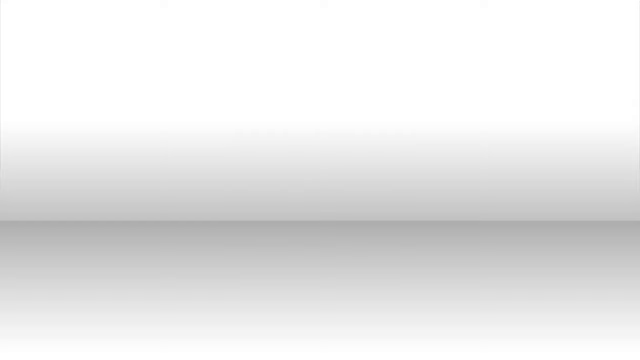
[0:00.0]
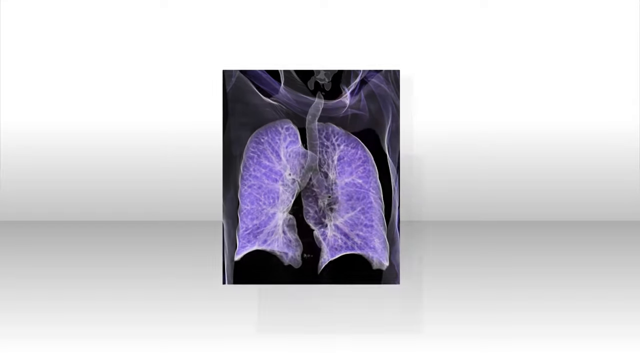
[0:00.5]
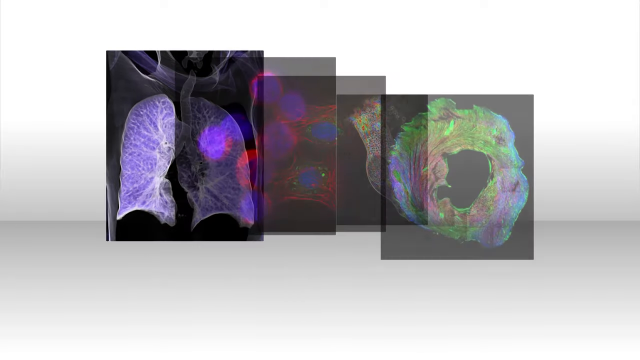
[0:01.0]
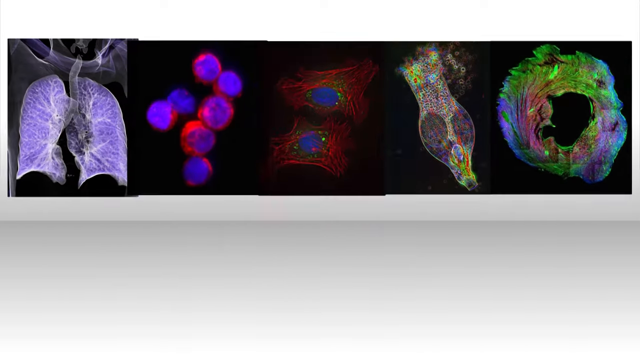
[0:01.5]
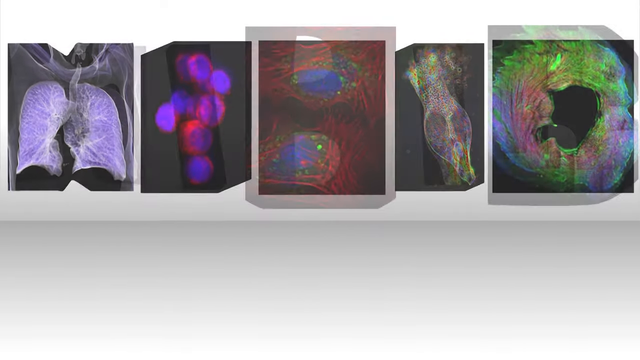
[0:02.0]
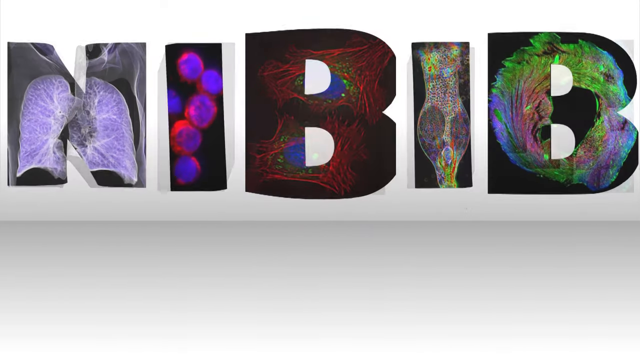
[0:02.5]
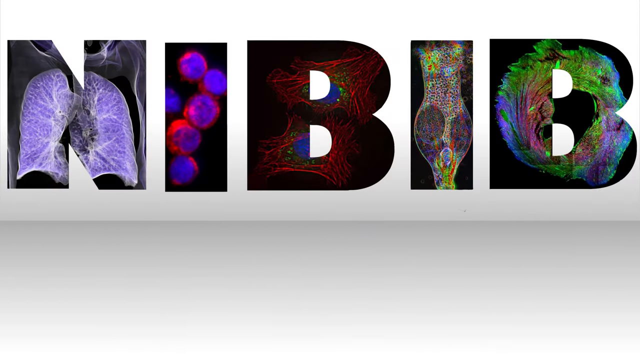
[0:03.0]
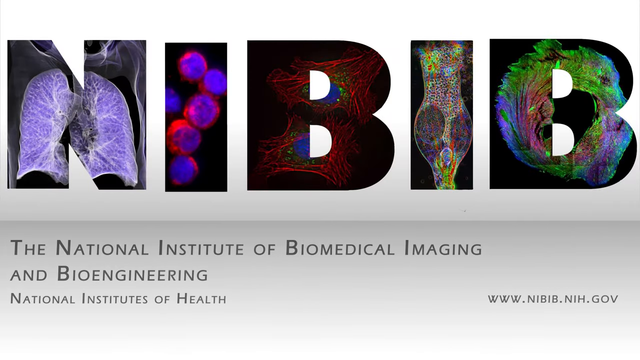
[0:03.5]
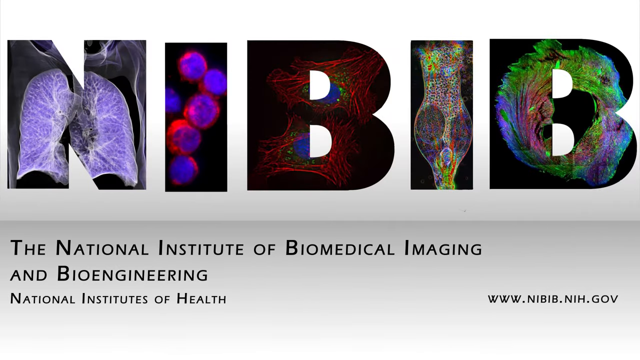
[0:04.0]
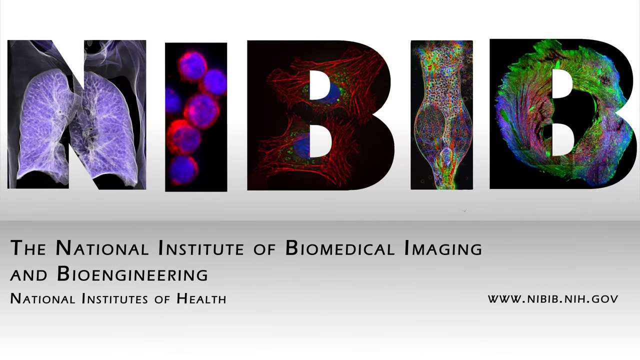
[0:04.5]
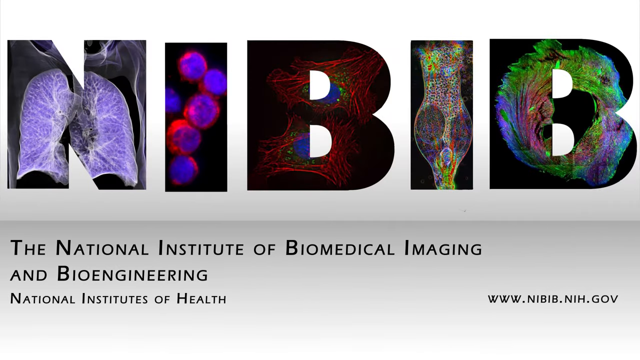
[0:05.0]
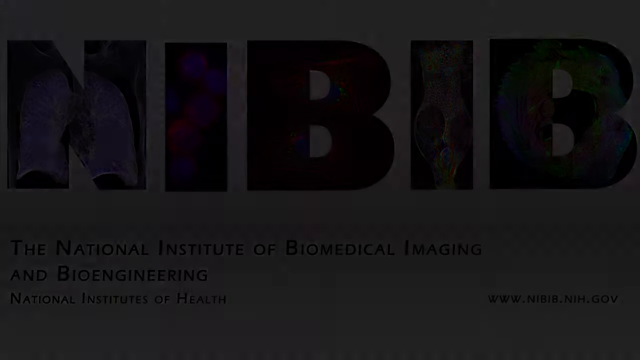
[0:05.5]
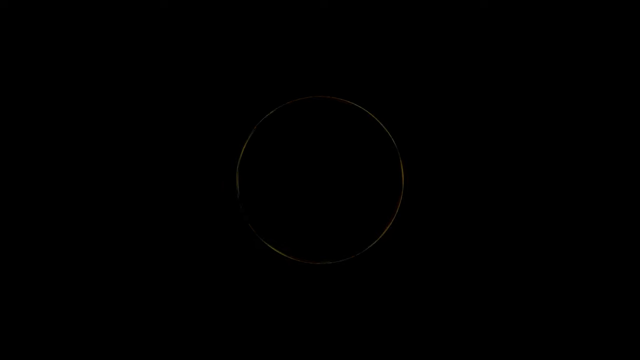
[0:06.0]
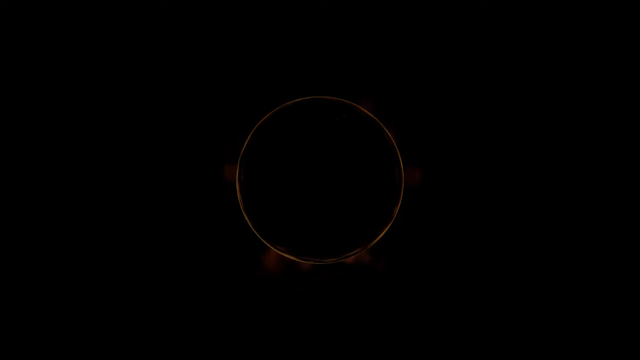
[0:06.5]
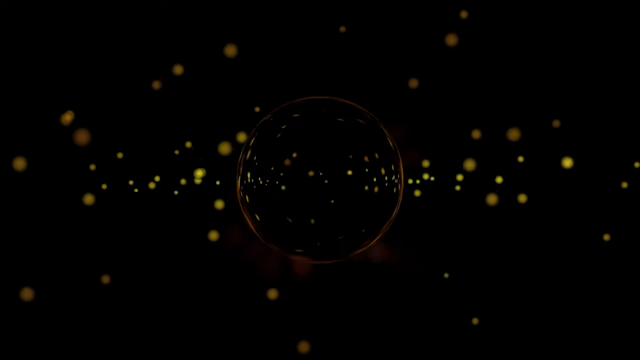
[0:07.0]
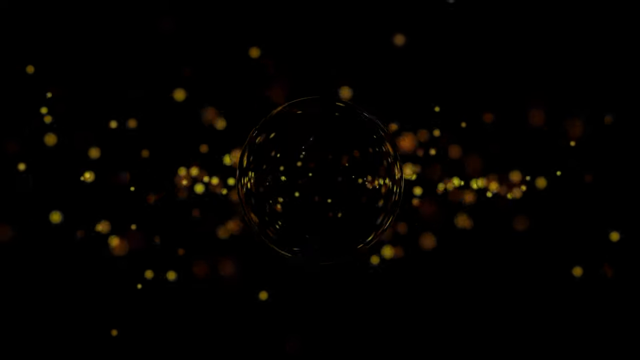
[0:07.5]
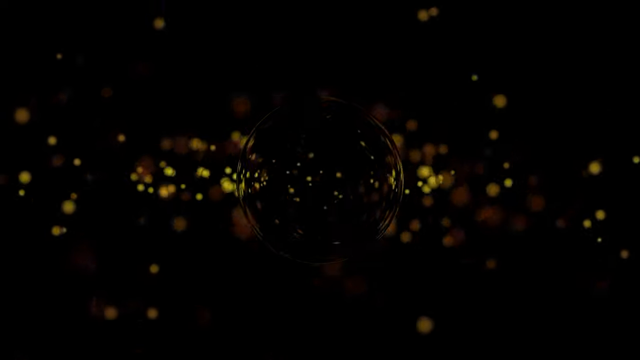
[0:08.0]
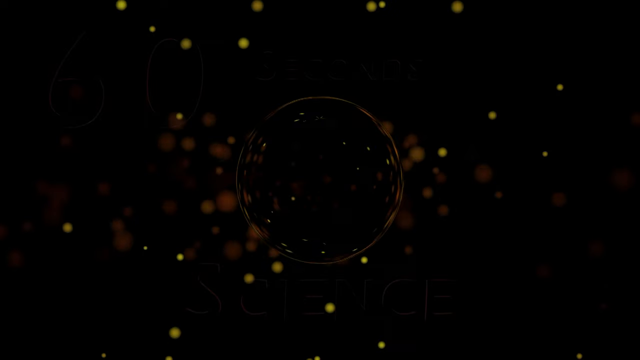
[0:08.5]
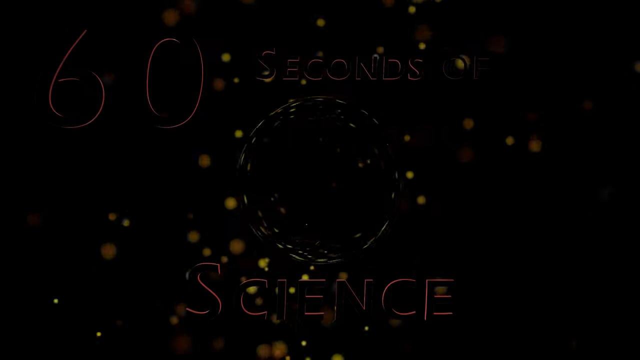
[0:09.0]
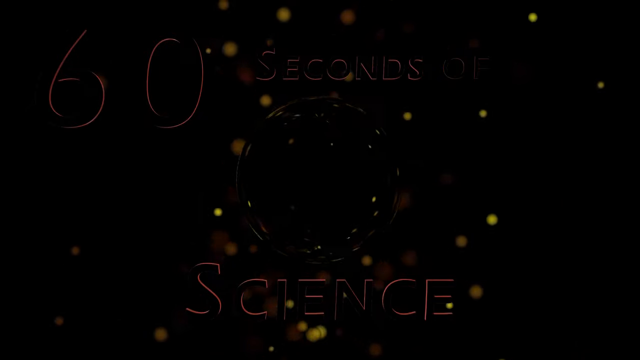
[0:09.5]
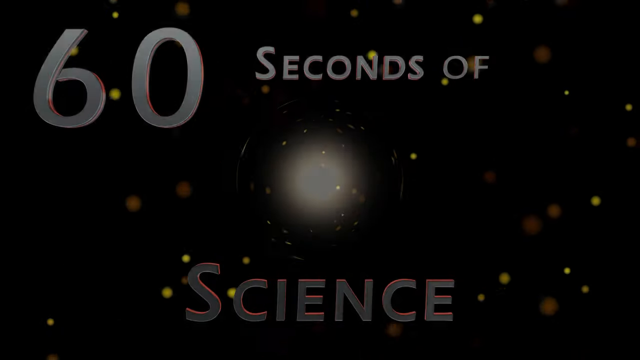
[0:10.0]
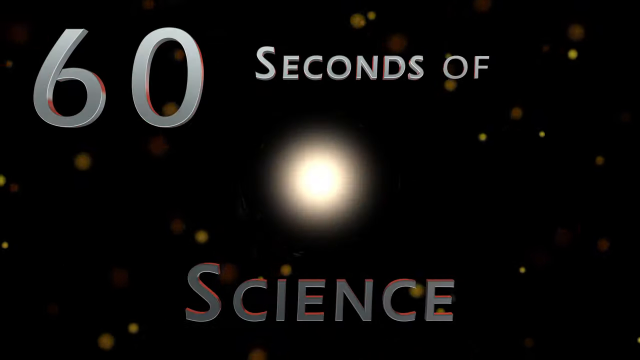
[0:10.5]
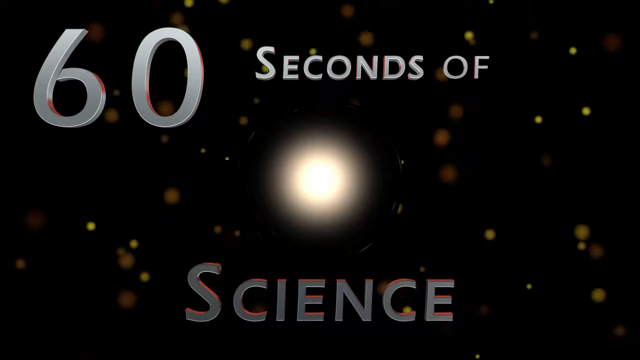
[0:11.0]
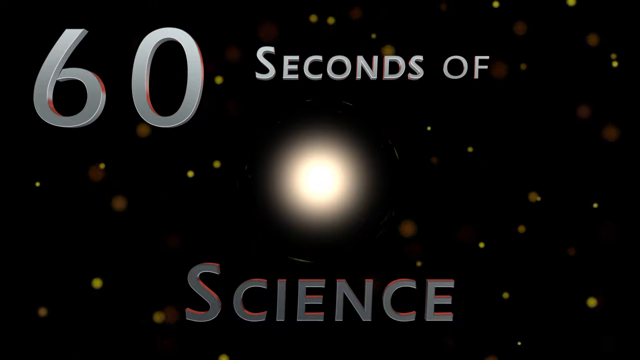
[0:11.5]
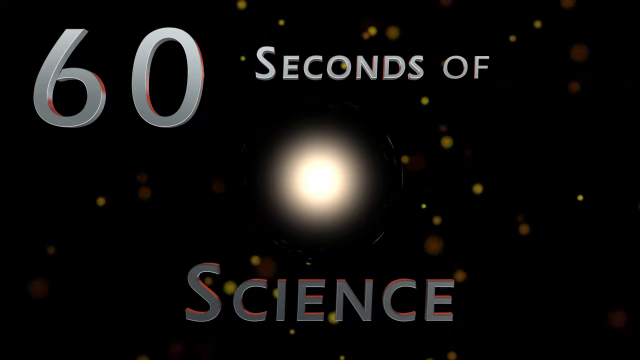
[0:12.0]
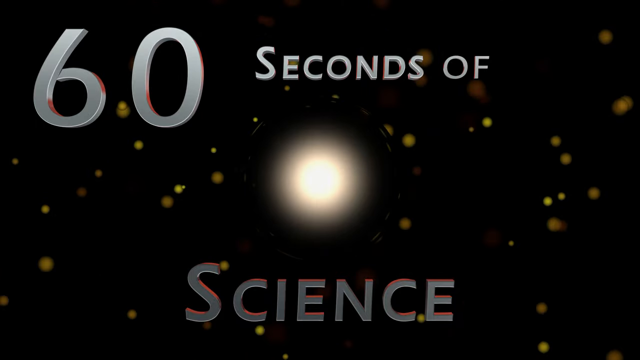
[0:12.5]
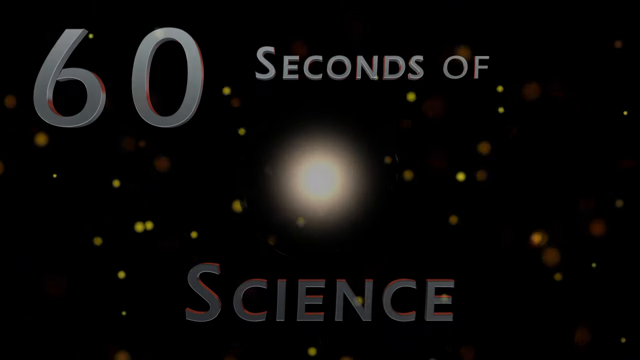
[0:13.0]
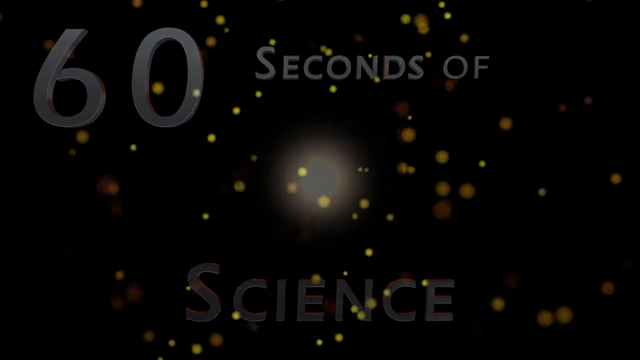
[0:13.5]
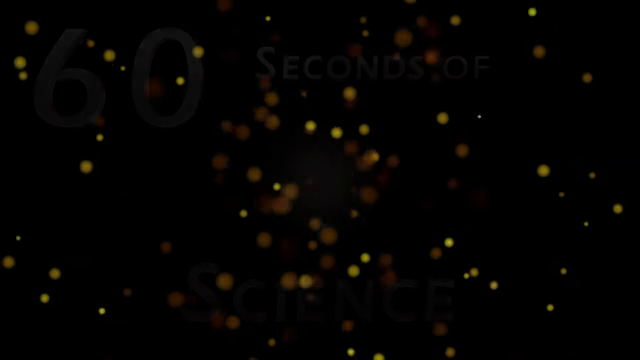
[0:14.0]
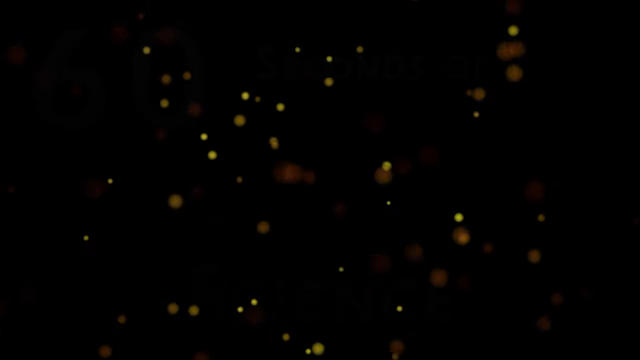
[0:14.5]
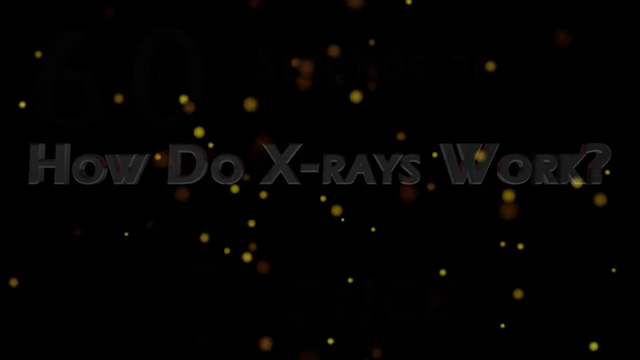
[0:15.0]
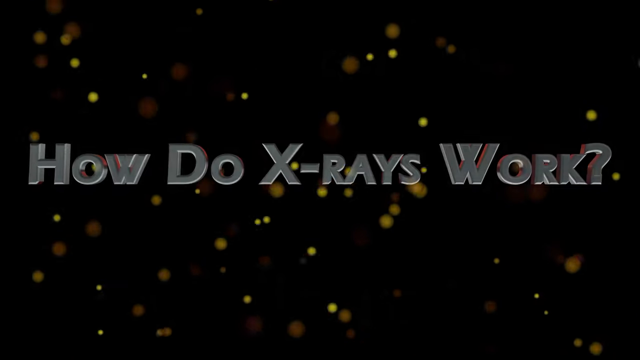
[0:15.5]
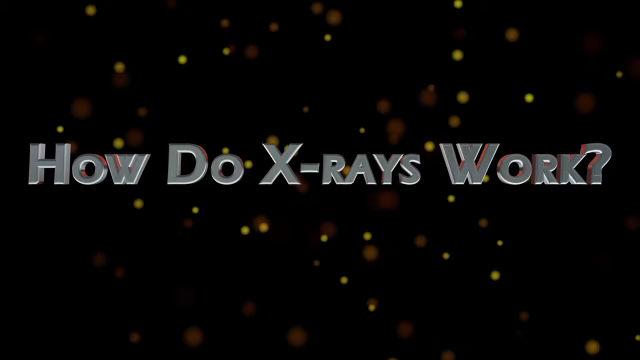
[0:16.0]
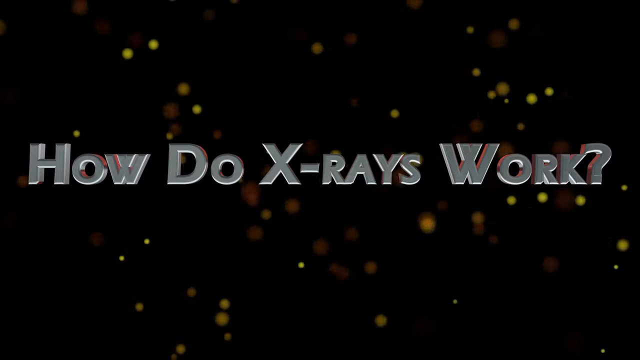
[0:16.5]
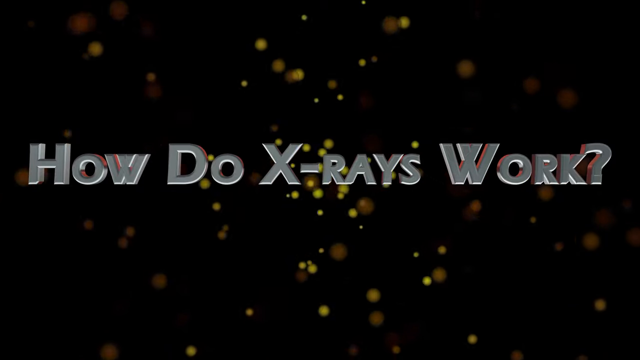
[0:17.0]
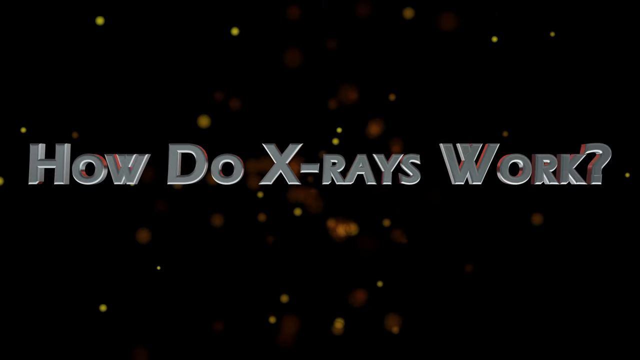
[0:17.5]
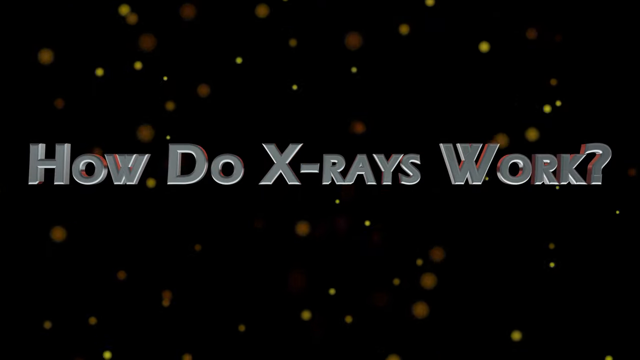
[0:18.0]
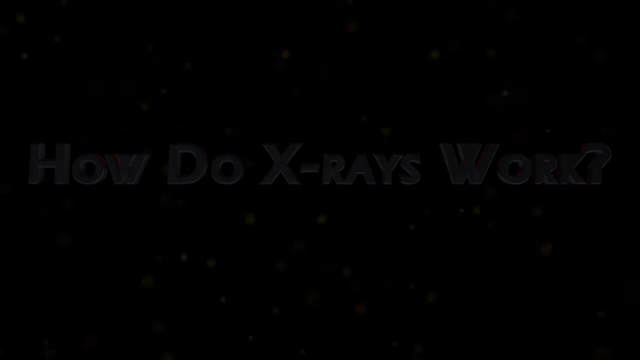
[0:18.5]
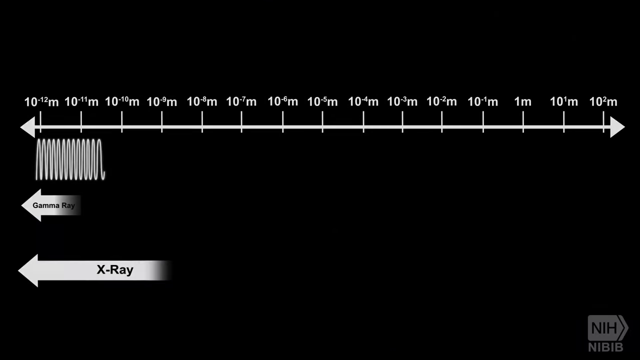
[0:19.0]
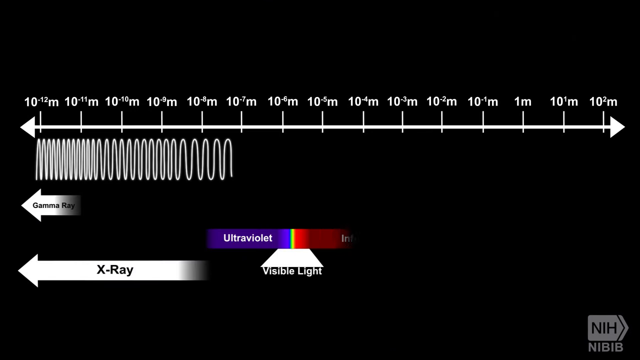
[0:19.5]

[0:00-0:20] The video opens with a small medical image of a person's lungs in an inverted color scheme: the lungs are a light purple hue on a black background. It then spans into the letters N-I-B-I-B, each letter containing a medical image, and below them appears "National Institute of Biomedical Imaging and Bioengineering" in black text on a white background. The screen goes black and shows a circle outline in the center with various yellow bokeh-like dots floating around; this swirls into text reading "60 seconds of science" with a bright sun-like orb in the center. That fades away, and the text "how do x-rays work" appears in silver WordArt-style lettering, with the bokeh dots still floating in the background. A graph then appears briefly.